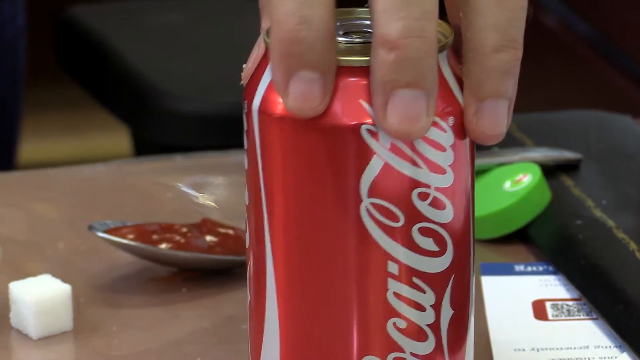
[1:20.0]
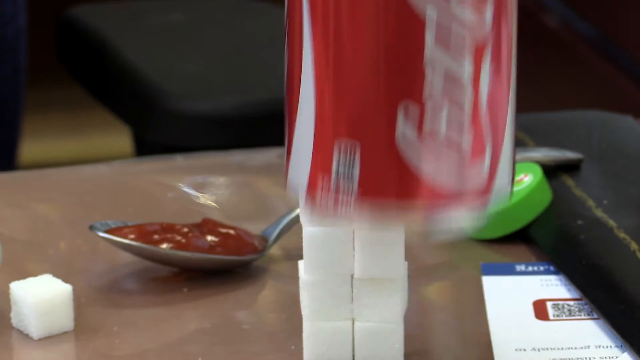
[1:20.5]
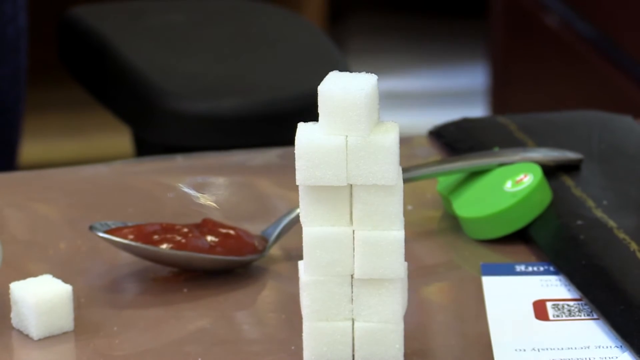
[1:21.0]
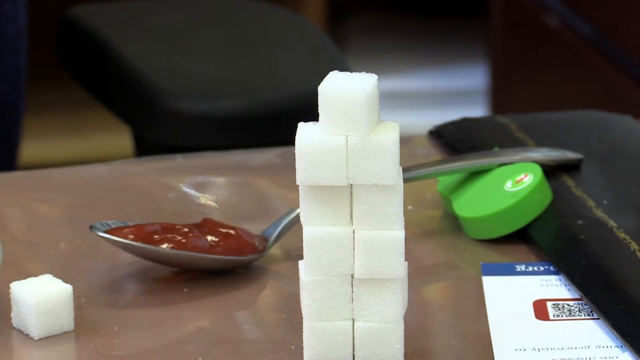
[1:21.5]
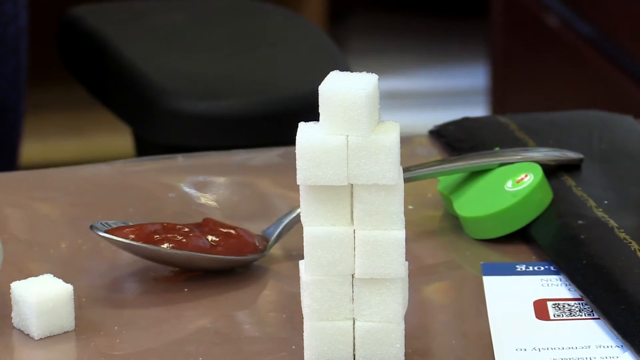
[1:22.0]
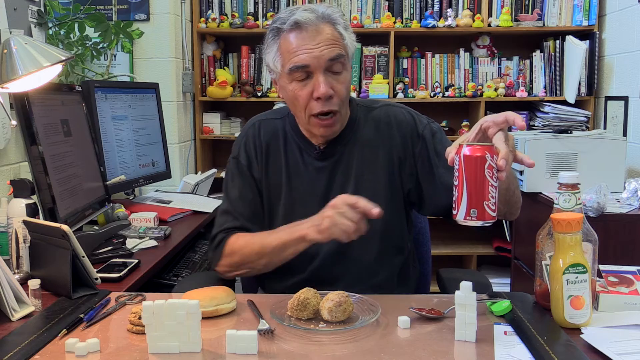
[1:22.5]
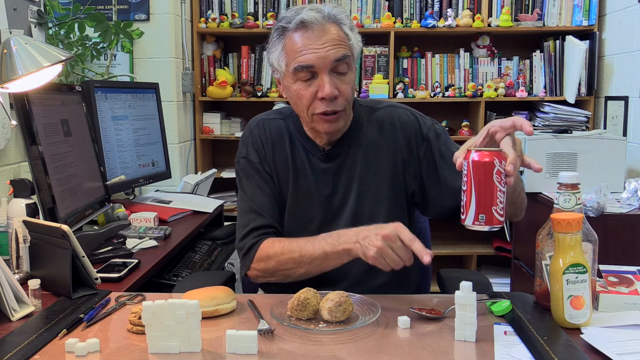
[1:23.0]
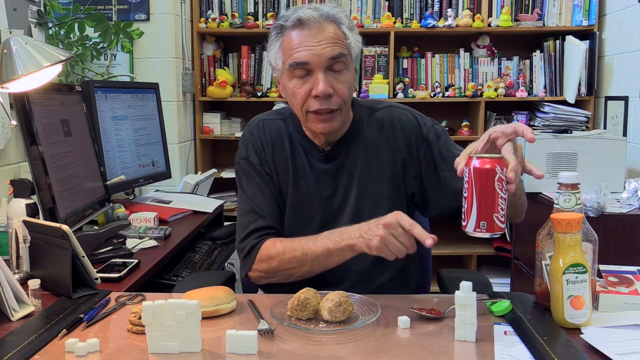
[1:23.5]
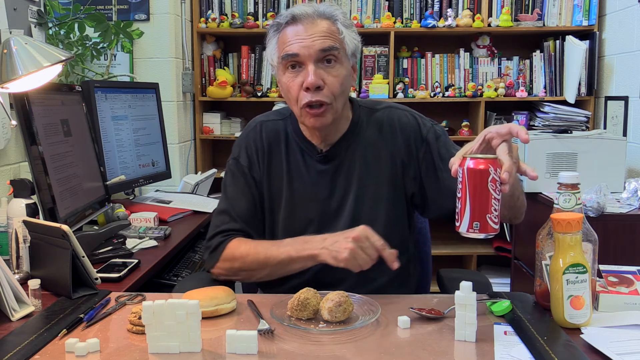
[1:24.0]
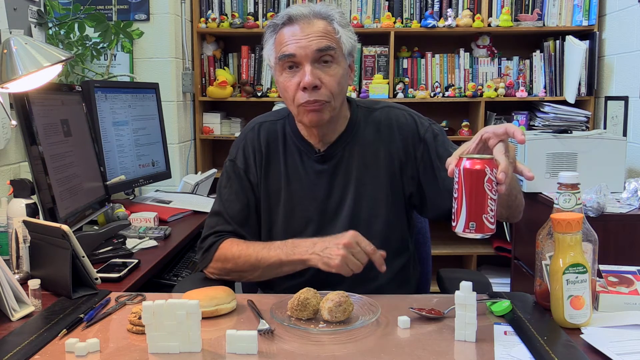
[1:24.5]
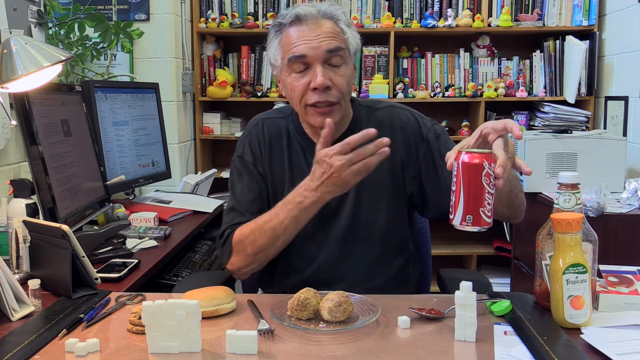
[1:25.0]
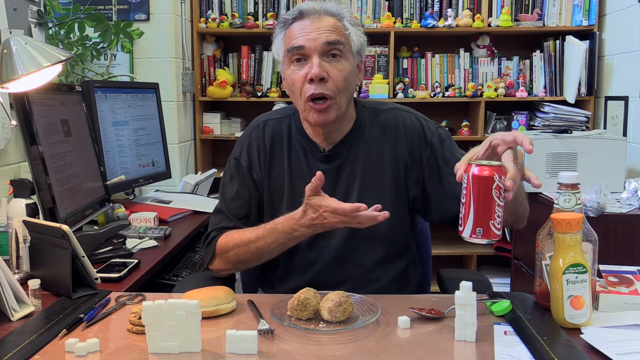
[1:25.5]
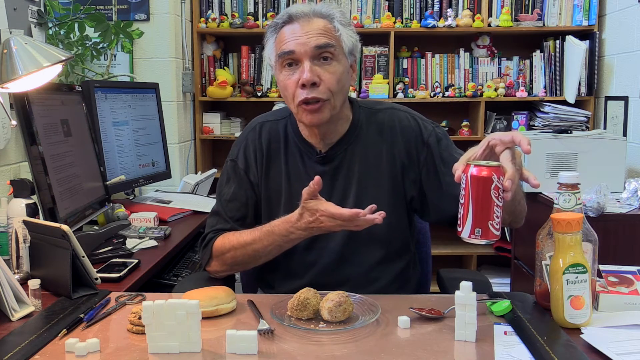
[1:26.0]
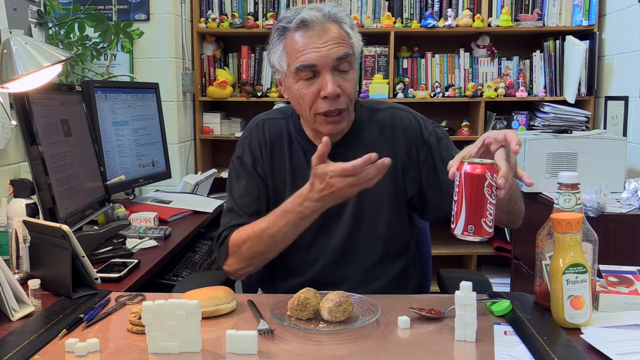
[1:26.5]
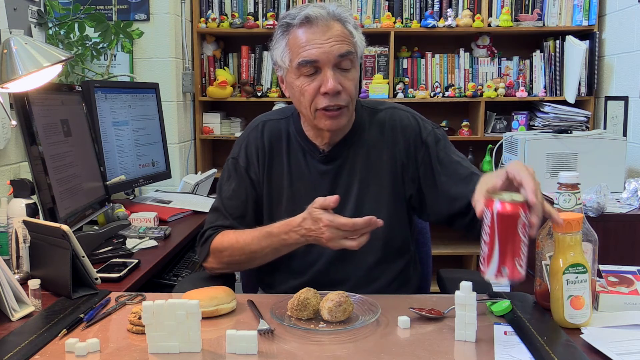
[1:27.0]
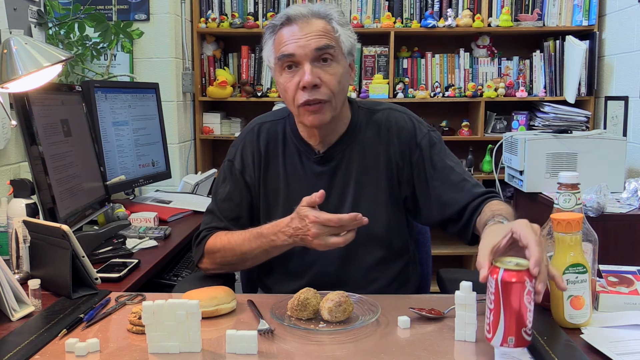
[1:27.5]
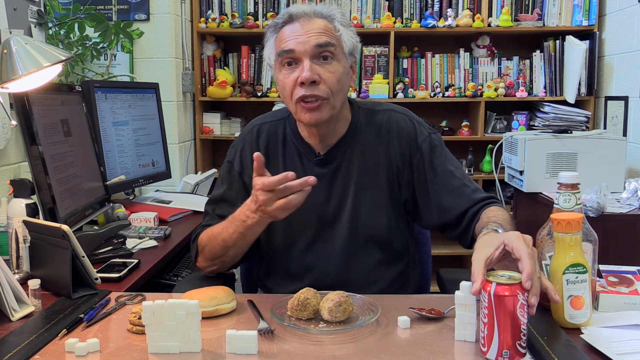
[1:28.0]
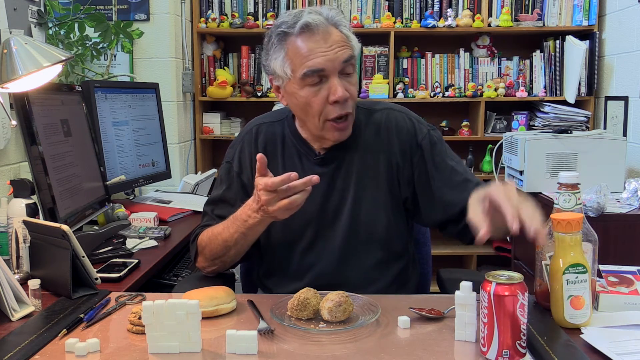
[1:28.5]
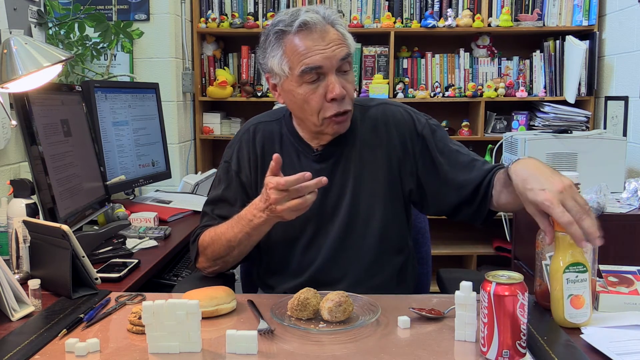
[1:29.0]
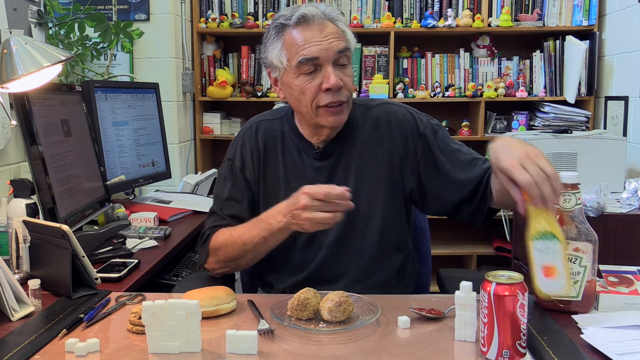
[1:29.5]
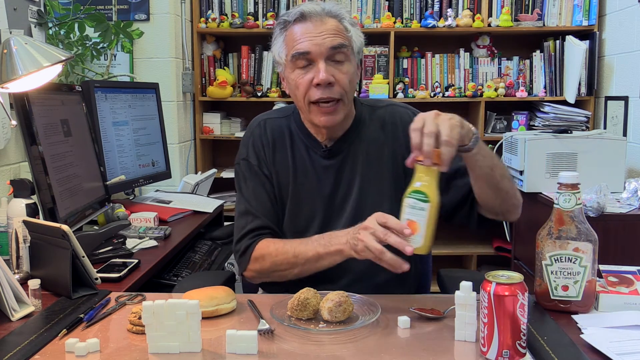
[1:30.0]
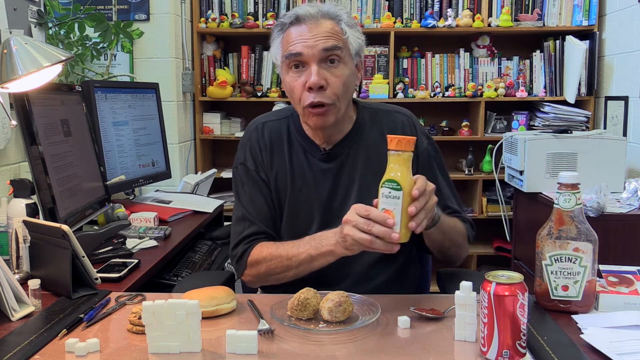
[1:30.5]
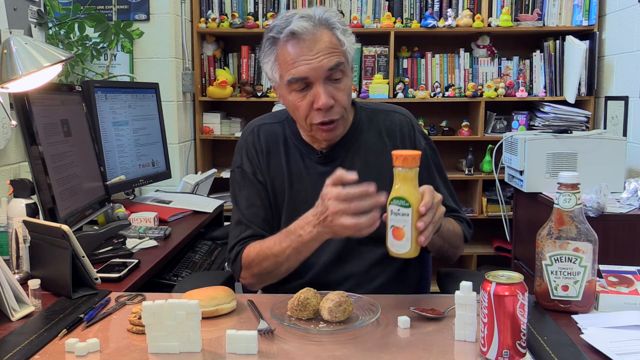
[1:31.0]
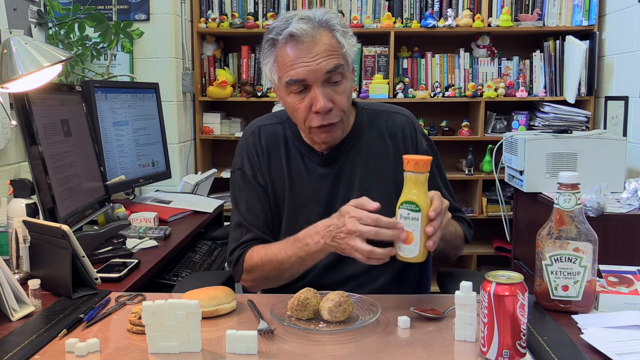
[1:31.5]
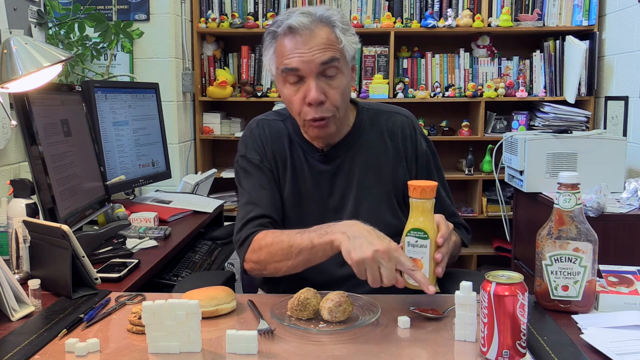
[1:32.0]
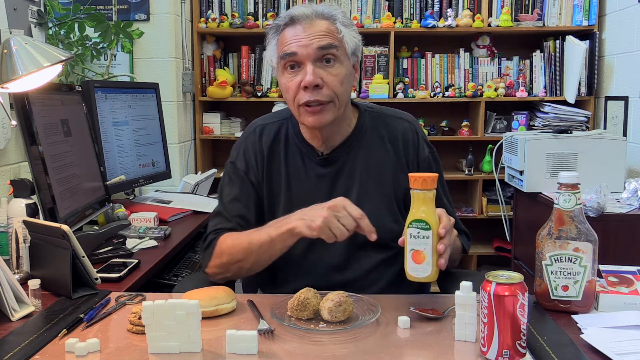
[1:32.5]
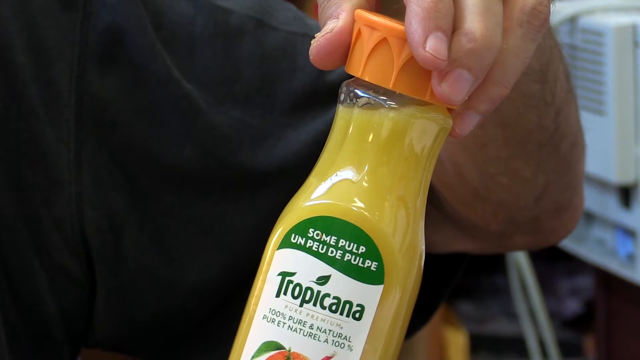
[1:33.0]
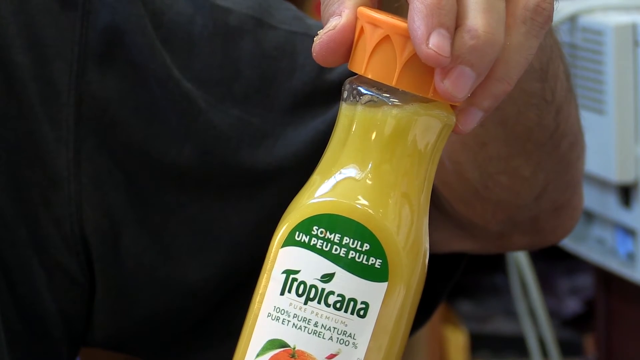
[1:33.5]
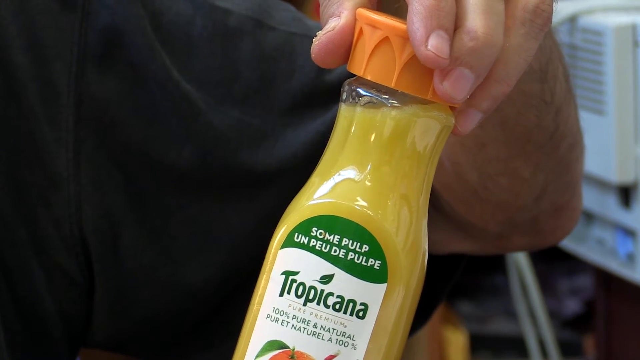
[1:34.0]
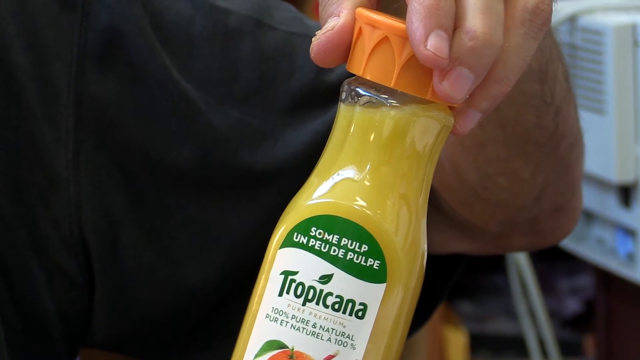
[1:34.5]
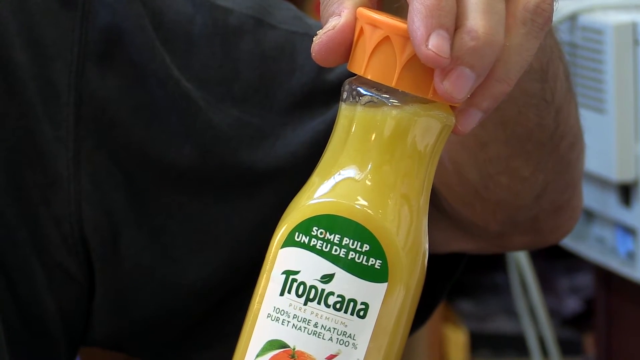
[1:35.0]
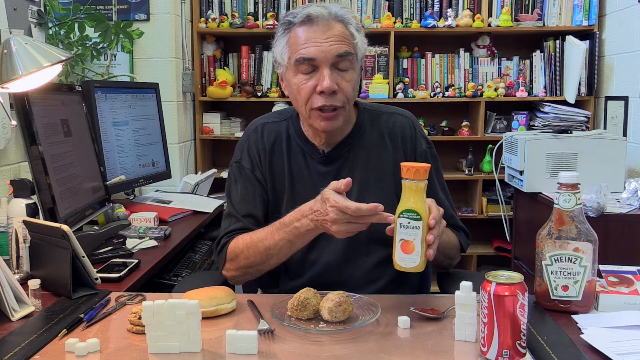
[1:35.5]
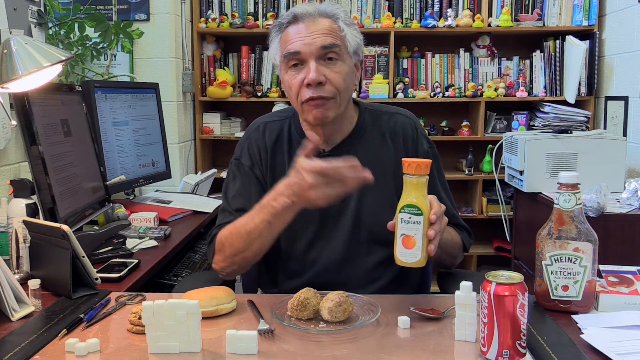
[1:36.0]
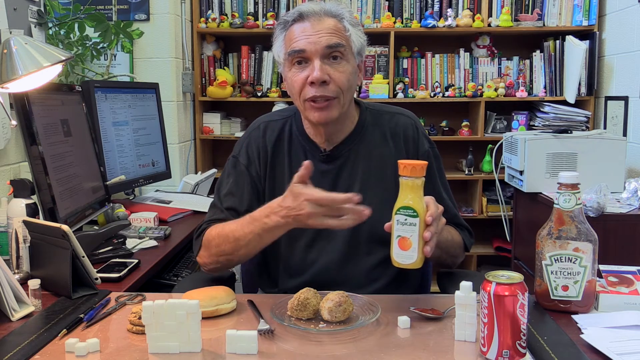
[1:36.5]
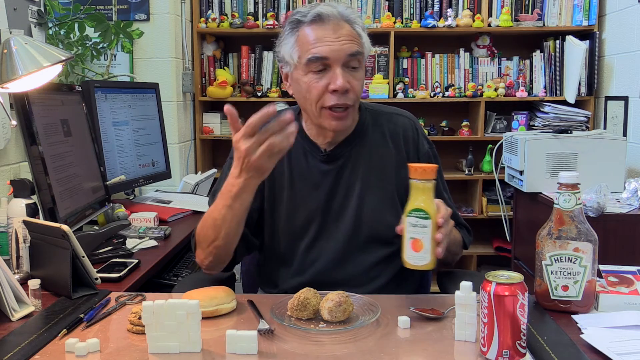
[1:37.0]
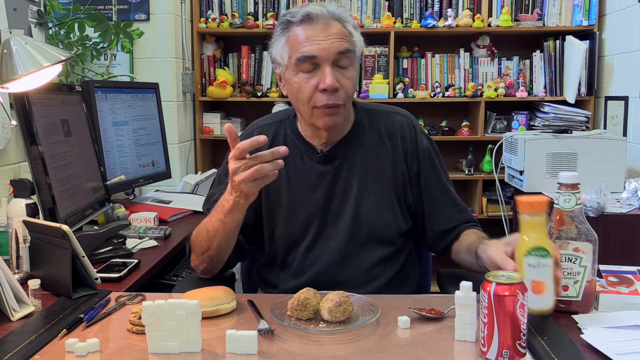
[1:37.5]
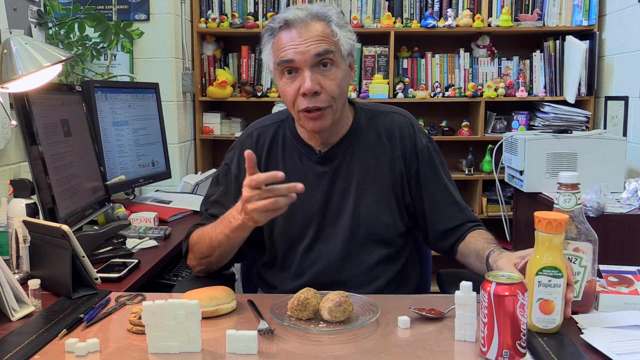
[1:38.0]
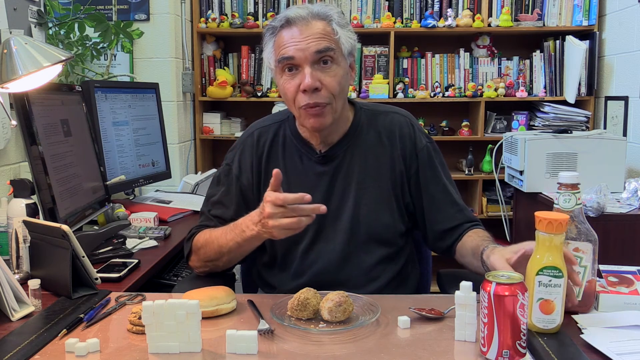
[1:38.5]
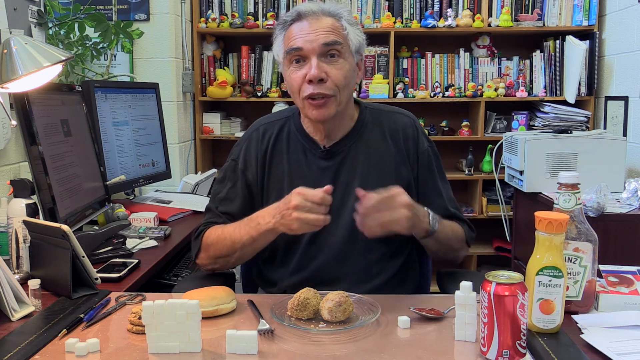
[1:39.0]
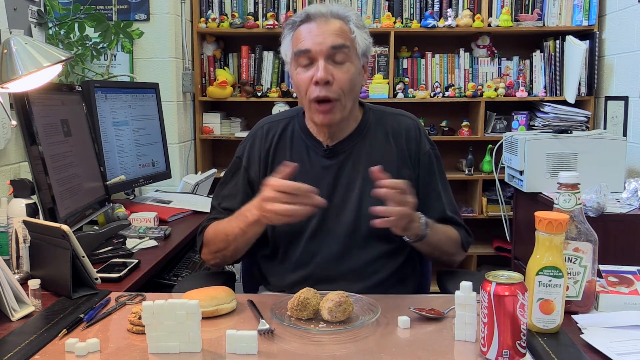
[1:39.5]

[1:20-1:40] The shot begins on a Coke can. The man picks up the red and white Coke can and shows a stack of sugar behind it. There are balls of food on a plate. He picks up a Tropicana orange juice, points to it, points back to the sugar, and touches its orange cap on top. Heinz ketchup, chocolate pudding and a sugar cube are visible, all apparently on his desk. The man is in a really crowded office space, with several rubber duckies at the back, two computer screens and a printer in the background. Something green and circular appears to be on the table, and there is a sugar cube to the left. The man seems to be showing how much sugar is in each of the items he picks up.